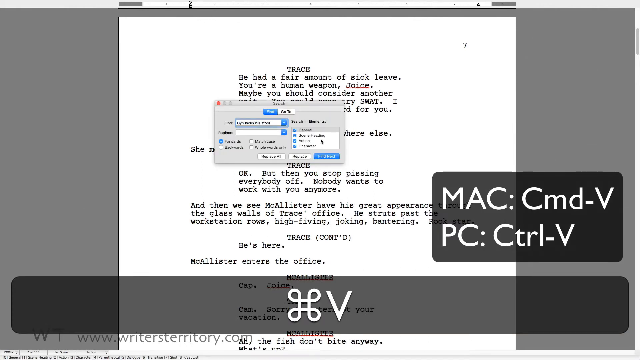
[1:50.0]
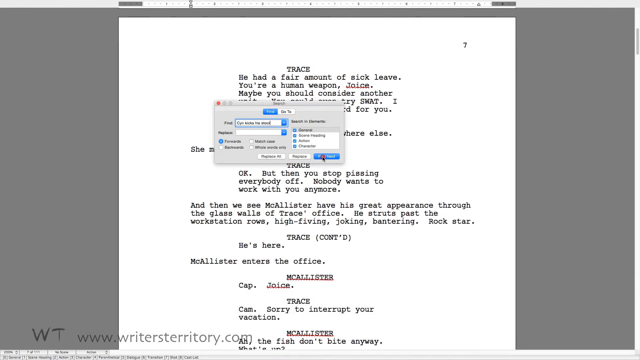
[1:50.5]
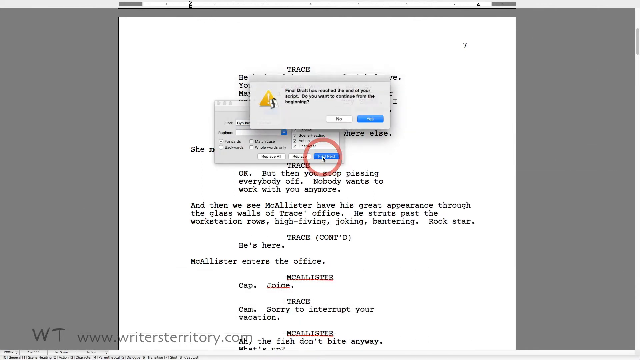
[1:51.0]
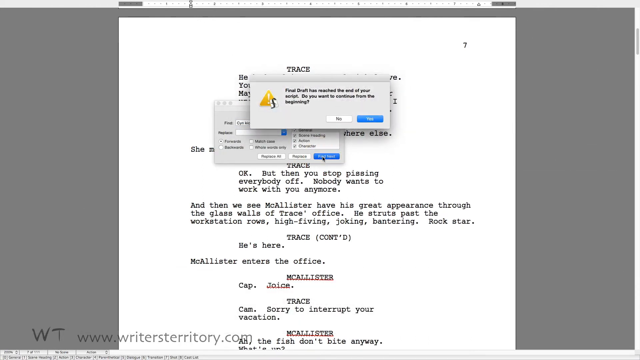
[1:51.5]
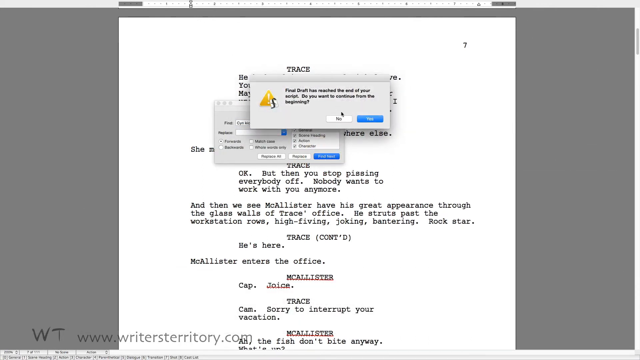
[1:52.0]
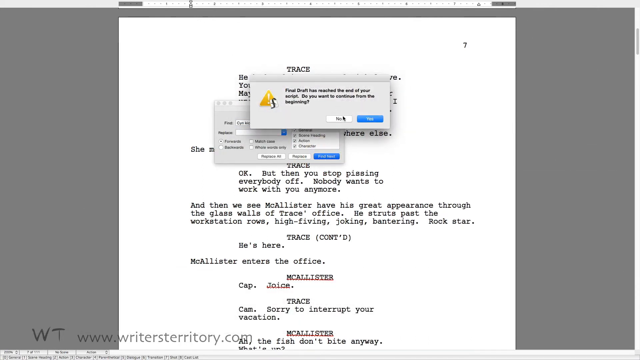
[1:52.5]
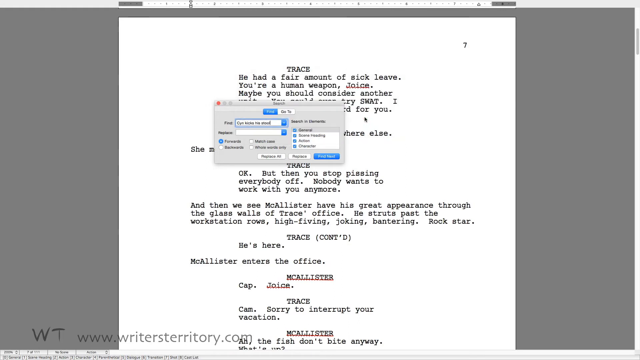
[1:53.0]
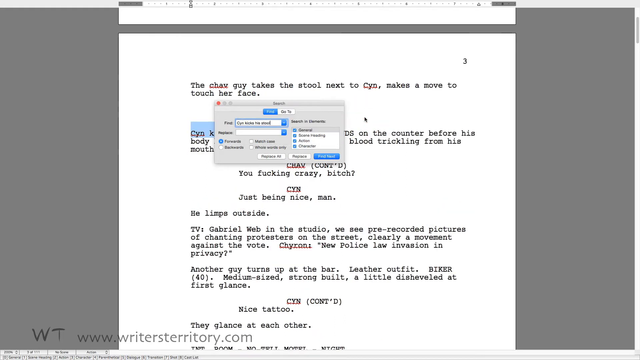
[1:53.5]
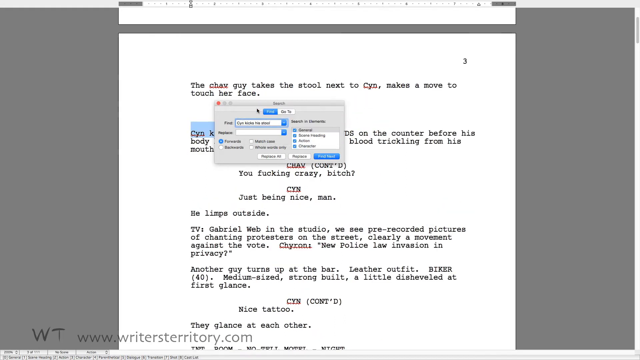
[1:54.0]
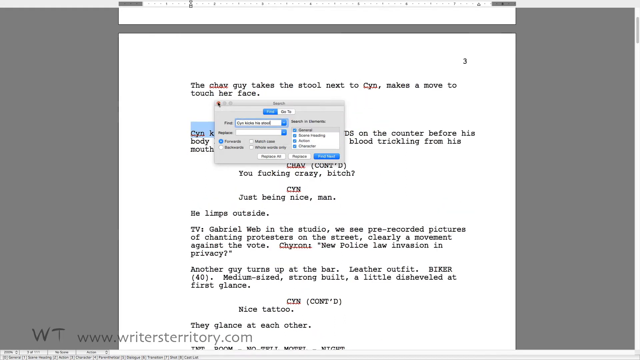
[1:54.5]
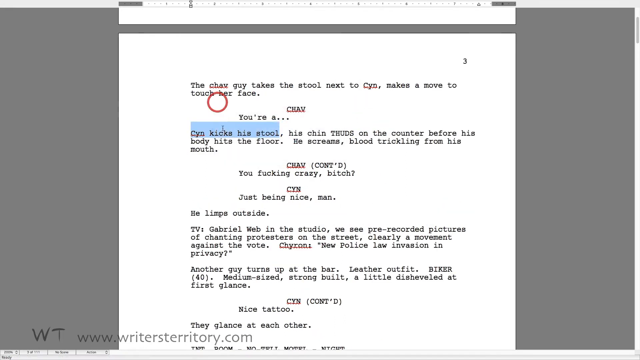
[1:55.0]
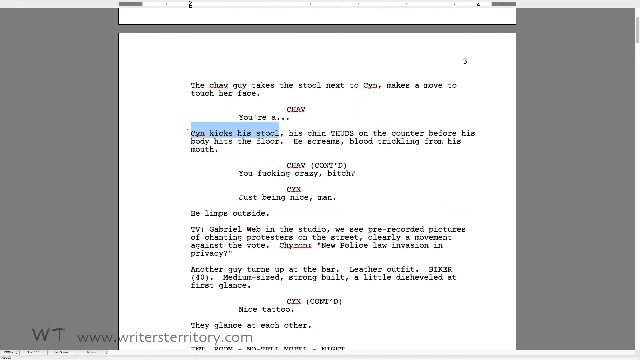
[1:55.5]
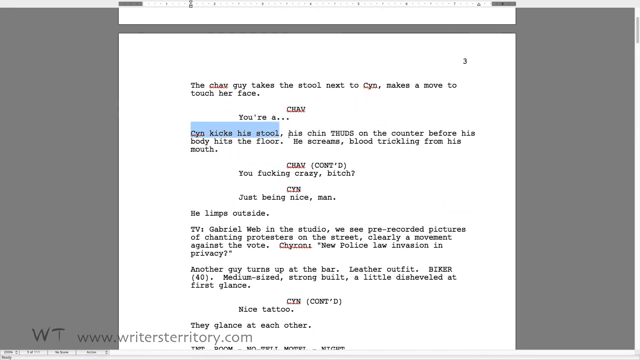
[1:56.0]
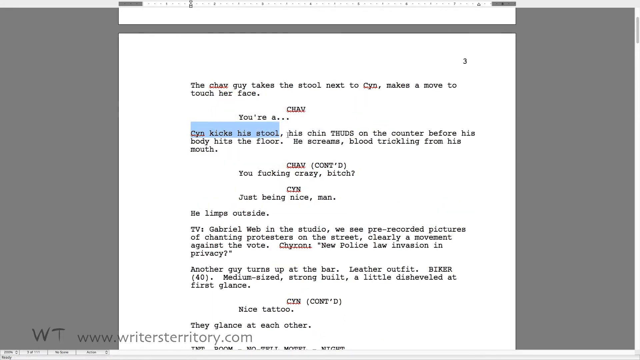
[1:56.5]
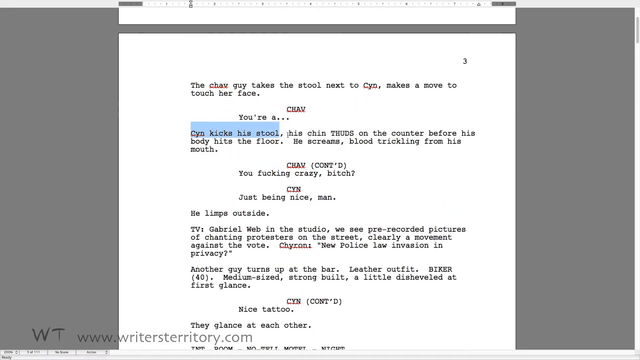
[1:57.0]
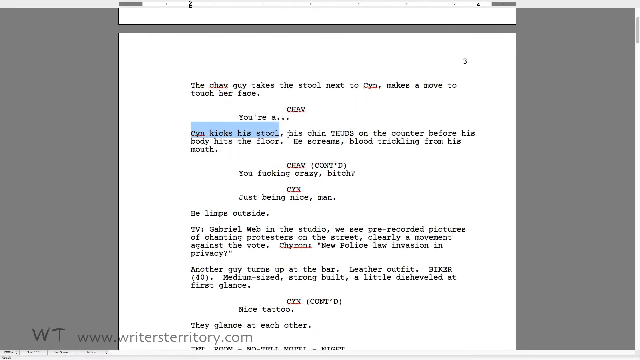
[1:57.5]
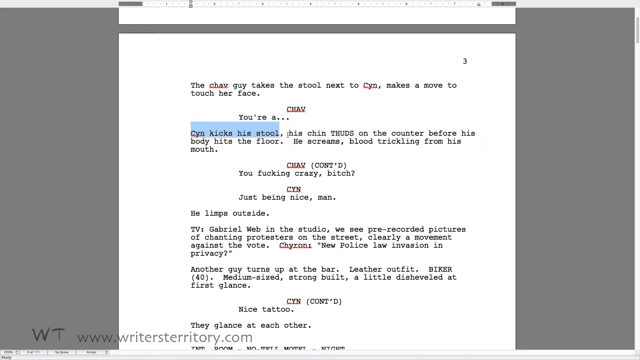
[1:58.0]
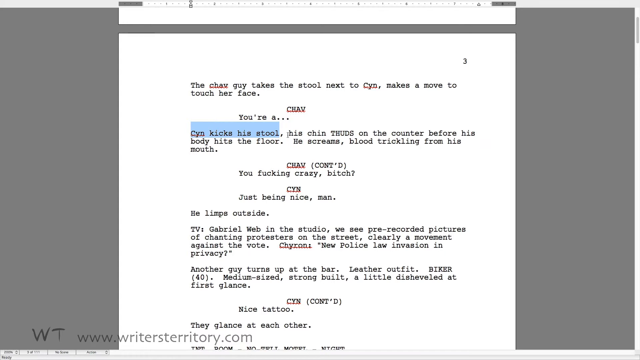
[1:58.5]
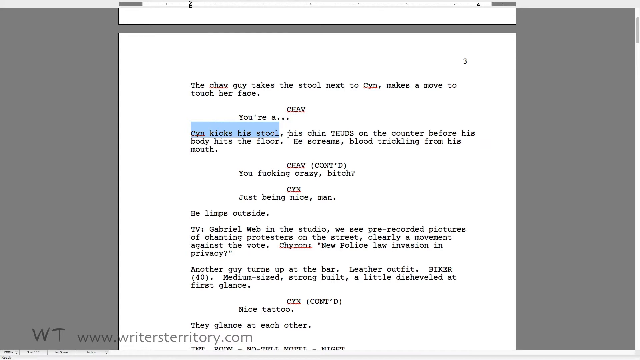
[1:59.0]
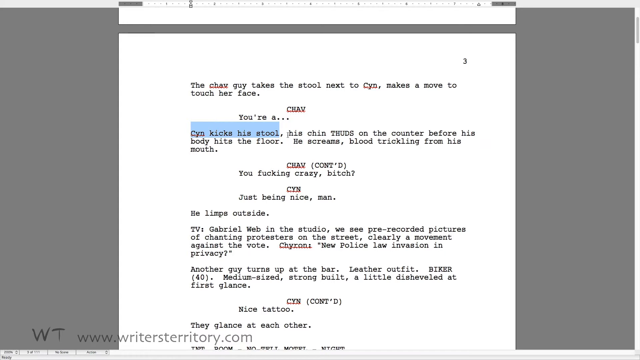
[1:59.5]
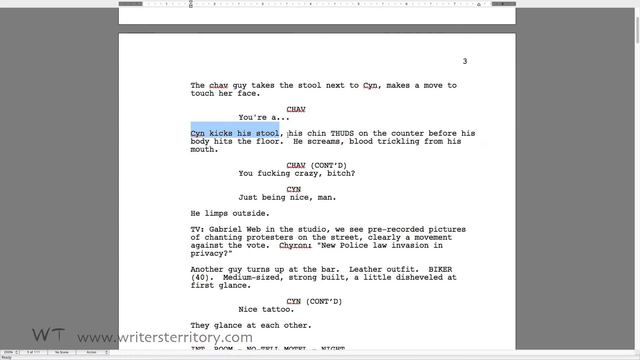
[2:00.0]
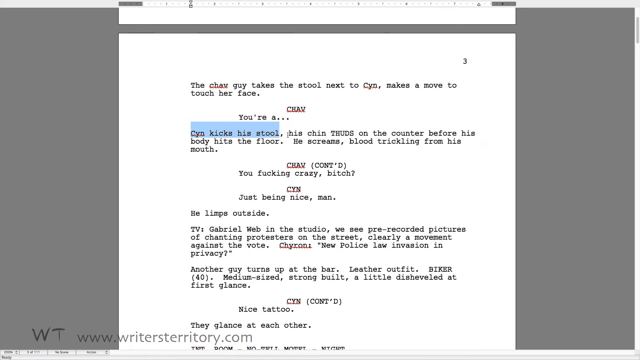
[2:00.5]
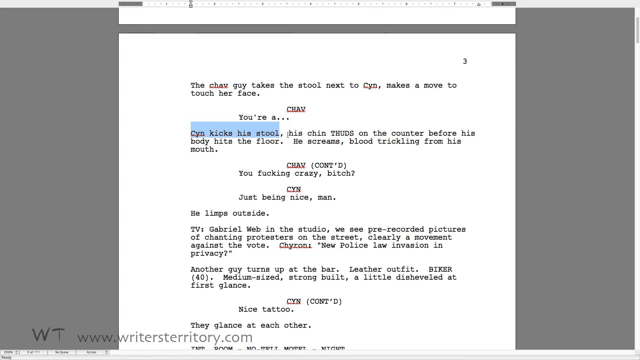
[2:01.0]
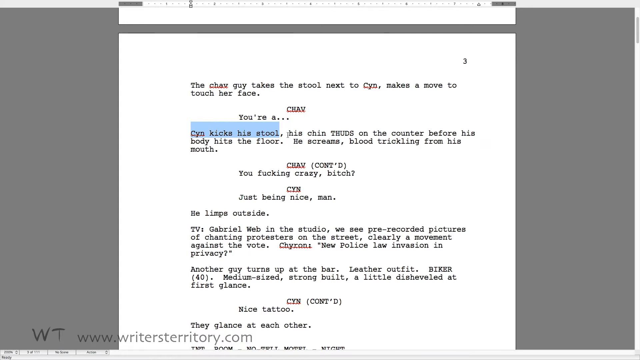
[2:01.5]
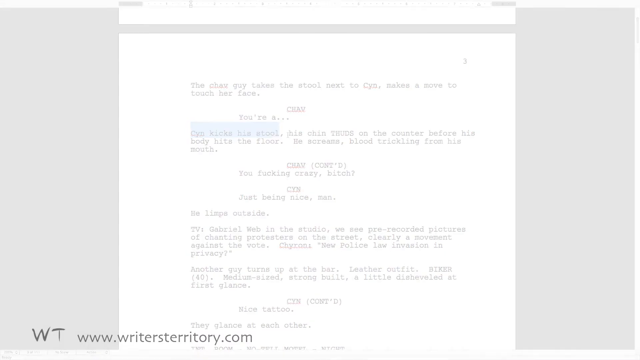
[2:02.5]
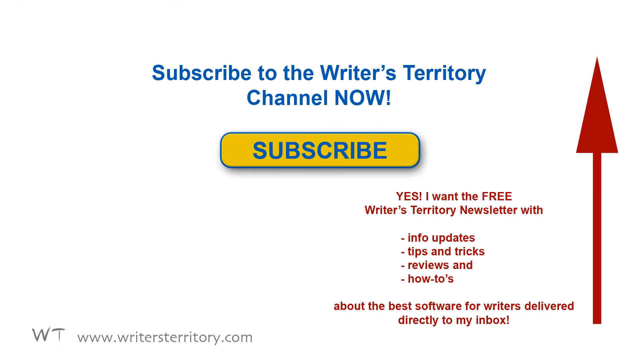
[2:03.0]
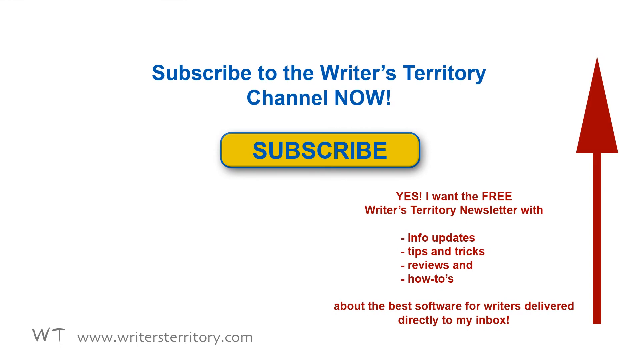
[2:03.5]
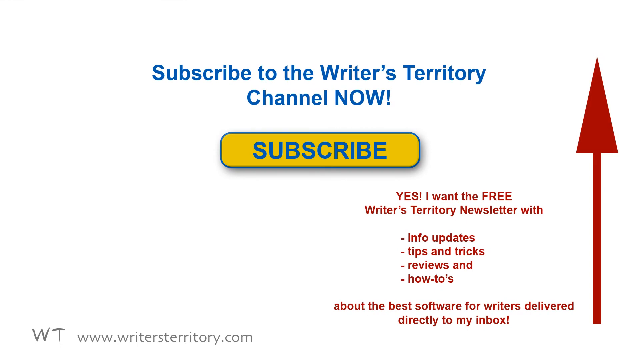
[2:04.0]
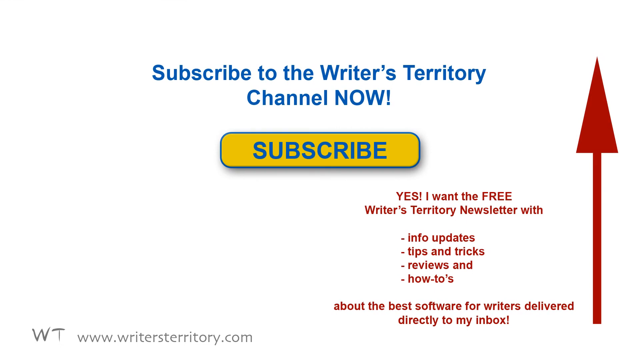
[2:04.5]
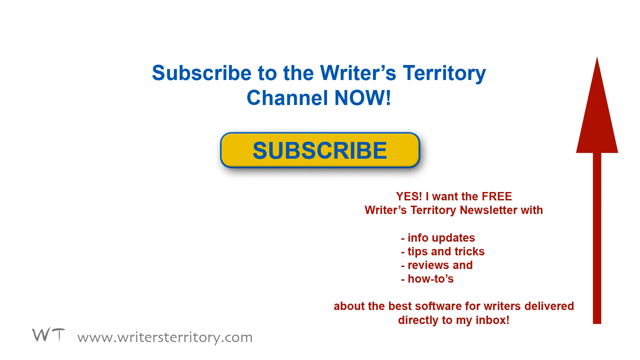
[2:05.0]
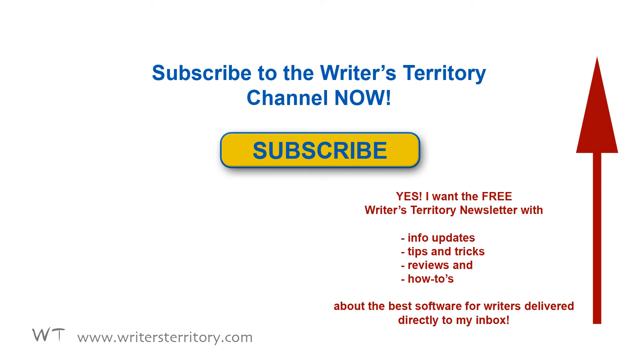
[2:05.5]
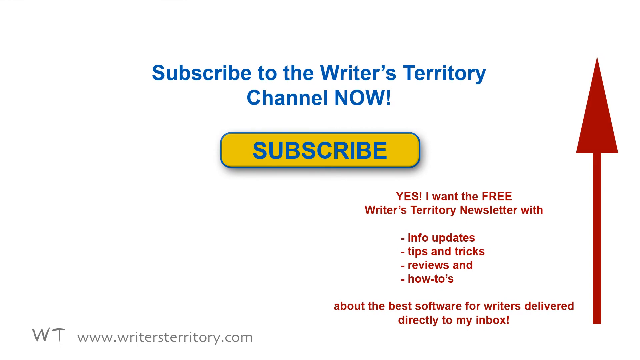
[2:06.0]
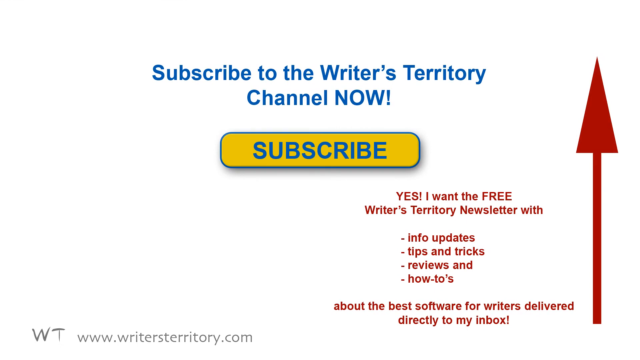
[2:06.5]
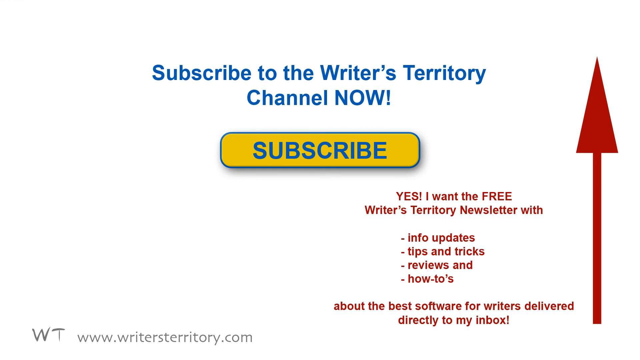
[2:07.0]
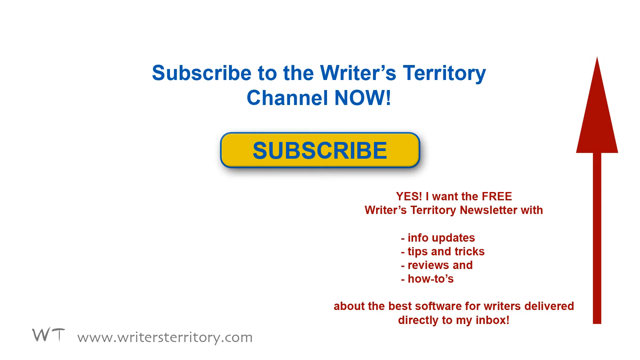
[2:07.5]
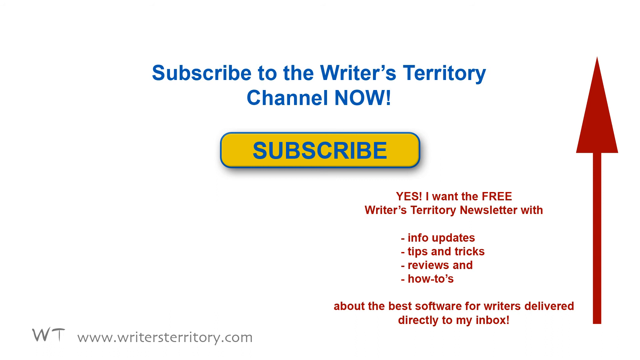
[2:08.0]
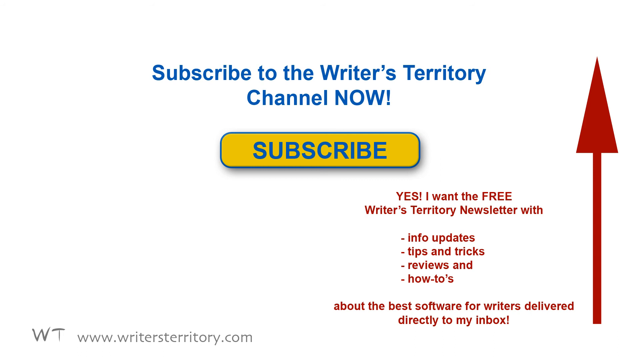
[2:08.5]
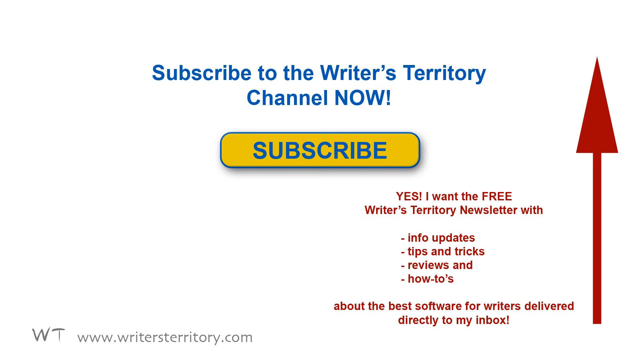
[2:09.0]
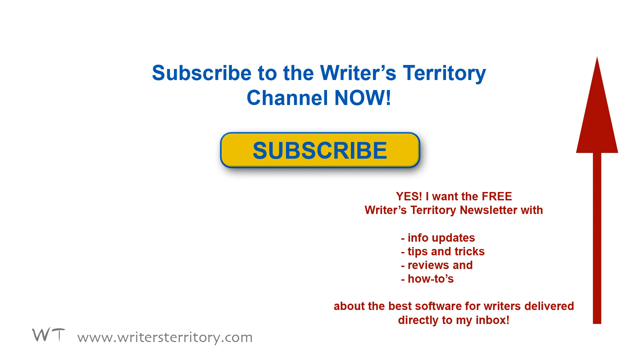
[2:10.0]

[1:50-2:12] In the pop-up, "find" is selected in blue, and to its right "go to" is in white. The copied "CYN kicks" text is pasted into the search field. Beneath it, all the options are checked, such as "general" and "action". He clicks the blue find button, and a pop-up with a warning triangle appears, saying that final draft has reached the end of the script and asking whether to continue from the beginning, with "yes" and "no" buttons; "yes" is in blue. He clicks yes and returns to the search pop-up, then closes it by clicking the red button at the top left. At the bottom of the screen, "www.writersterritory.com" appears. The view then changes from the document to a screen reading "subscribe to" the "Writers Territory channel now", with a yellow subscribe button, a vertical red line running up the right side, and text about a free newsletter.